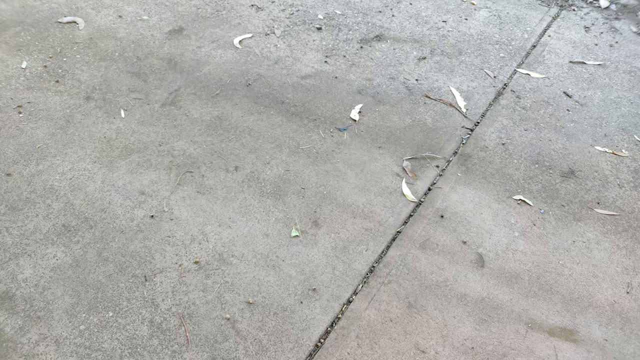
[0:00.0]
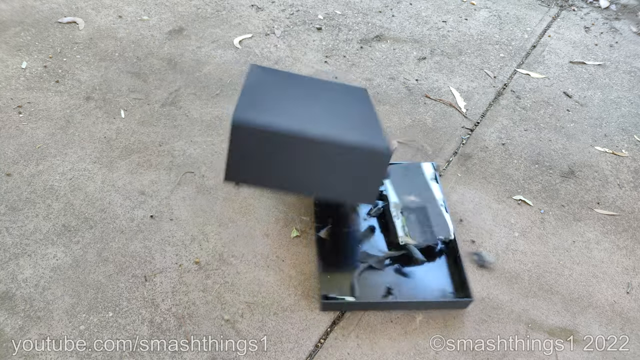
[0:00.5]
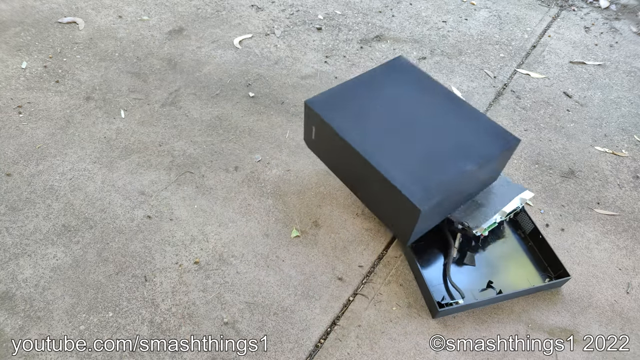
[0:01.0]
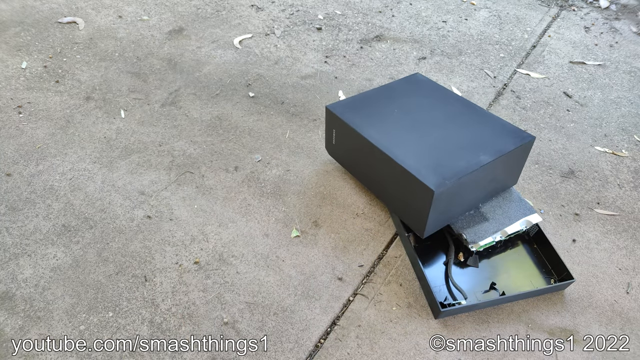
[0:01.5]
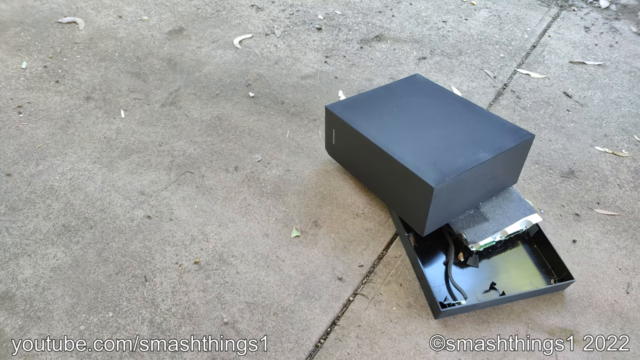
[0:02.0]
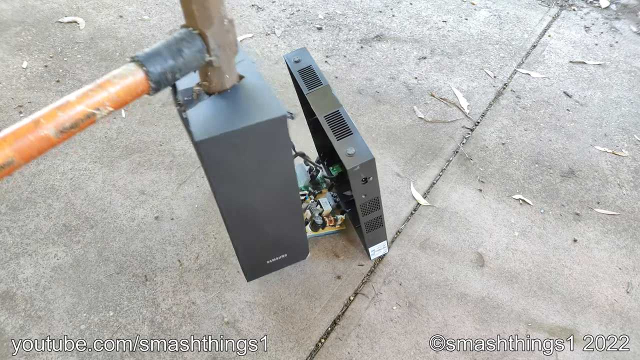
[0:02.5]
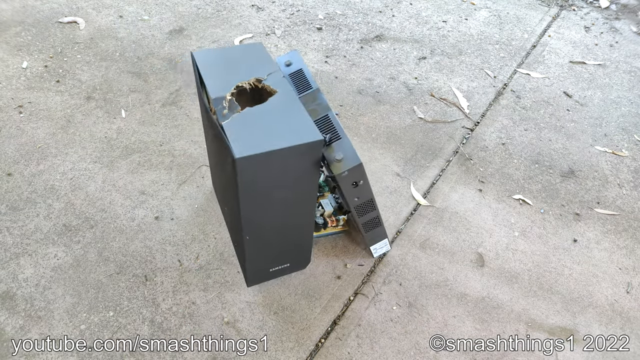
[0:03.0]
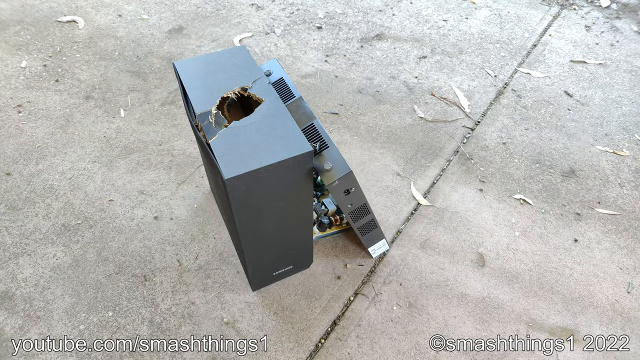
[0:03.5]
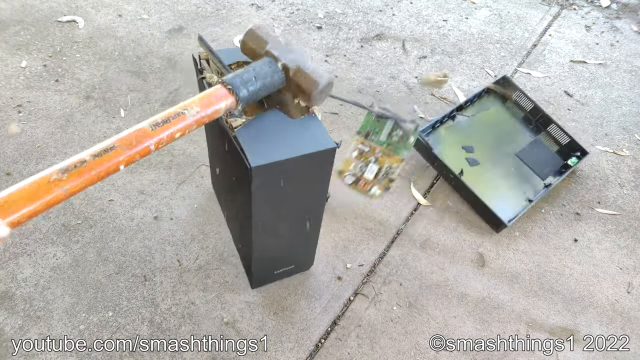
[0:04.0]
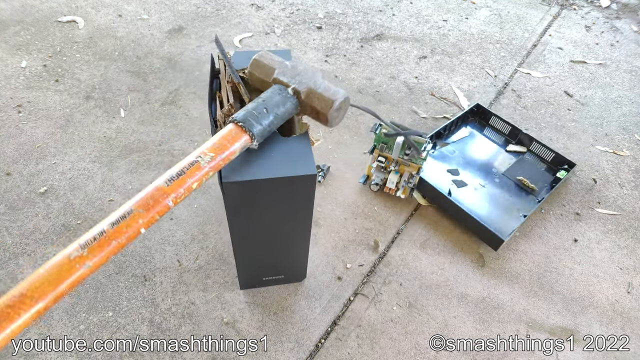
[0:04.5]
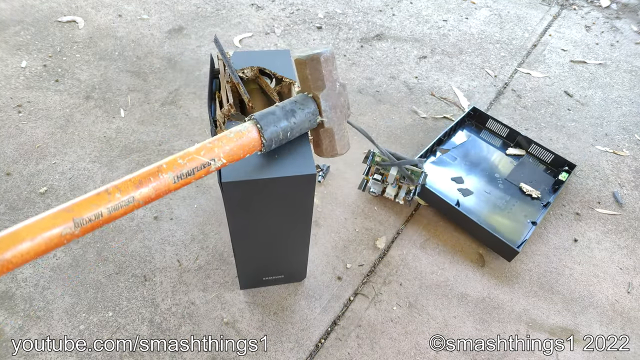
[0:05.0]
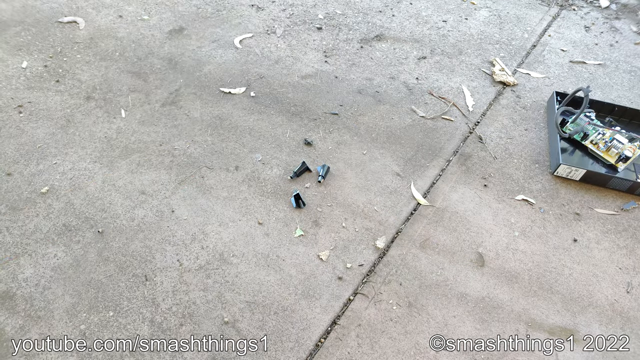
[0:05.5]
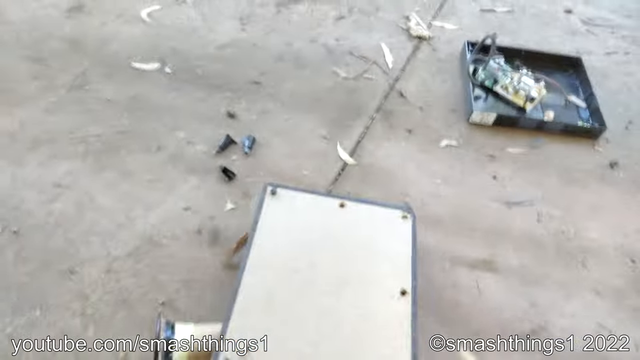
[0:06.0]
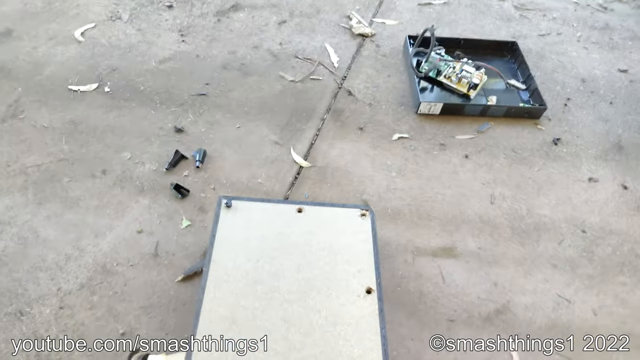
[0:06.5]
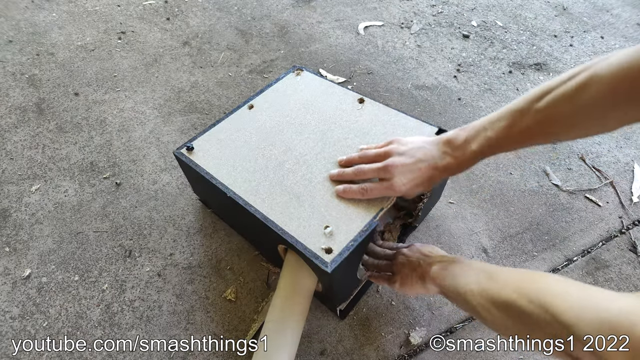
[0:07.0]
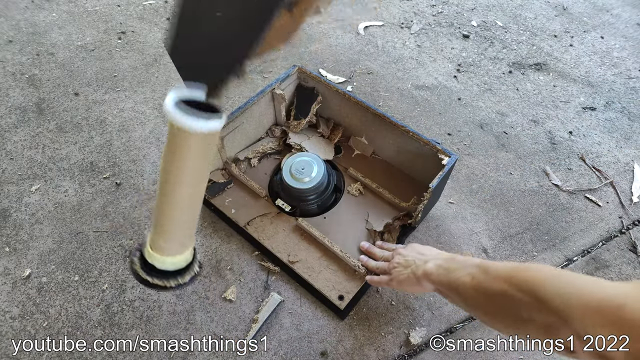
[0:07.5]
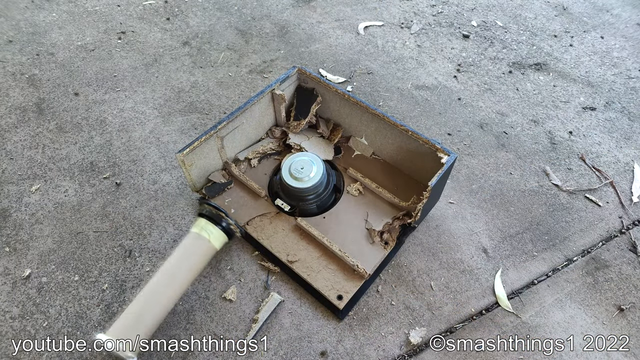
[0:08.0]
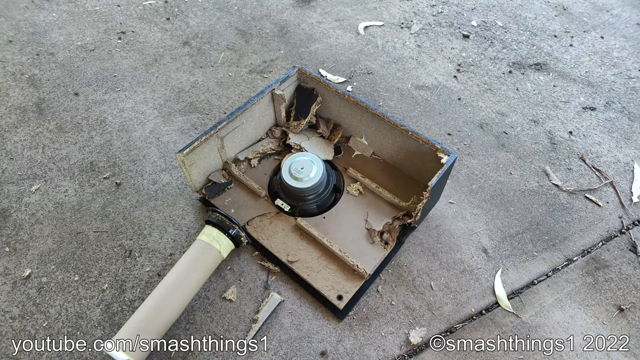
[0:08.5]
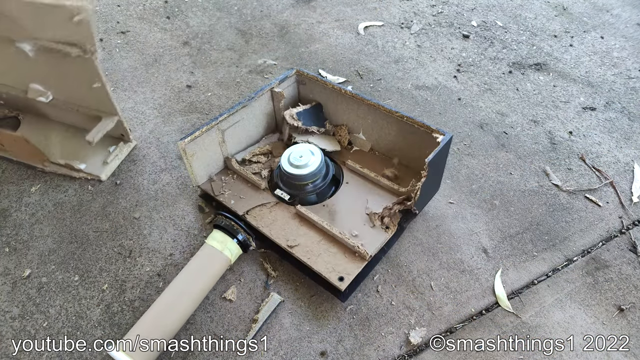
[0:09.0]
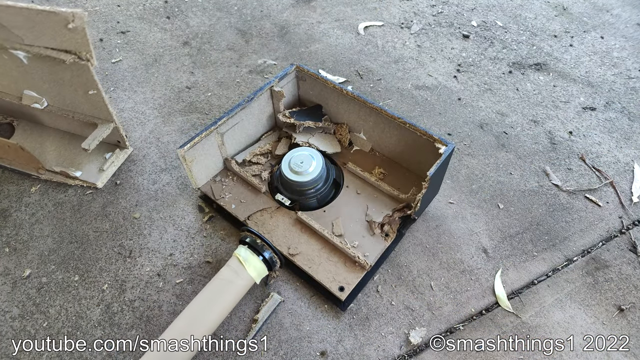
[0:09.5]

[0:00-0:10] Outside, a piece of equipment is being destroyed on top of a cement slab. A man quickly throws a computer tower onto the ground, possibly in anger. Many leaves cover the ground. When the computer hits the ground, it breaks apart. The man then hits it a few times with a sledgehammer to break it apart even more, busting it into several different pieces. Broken pieces are all over the ground, along with some screws that landed there after it was busted apart.